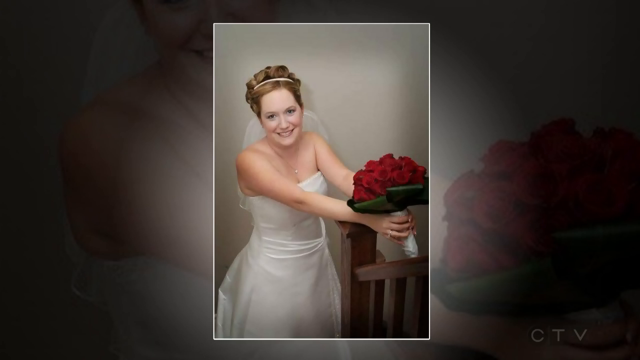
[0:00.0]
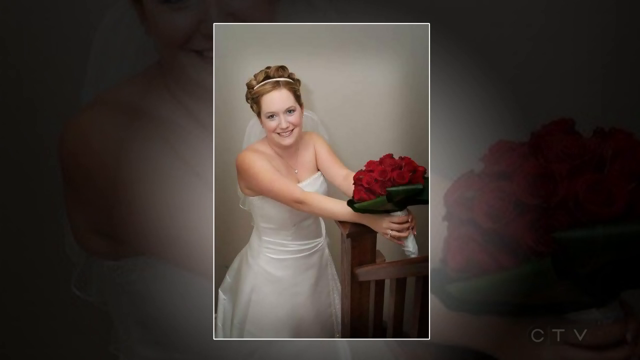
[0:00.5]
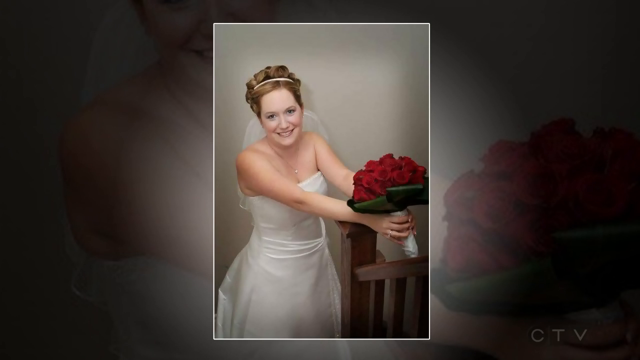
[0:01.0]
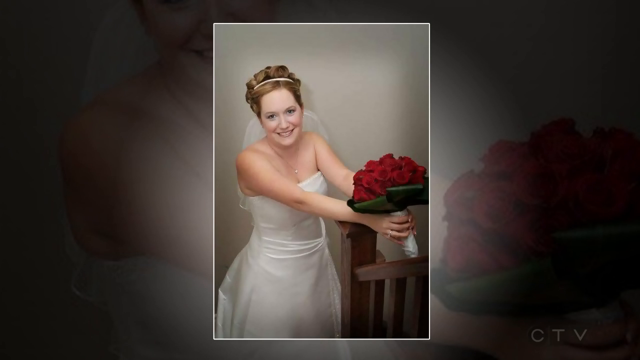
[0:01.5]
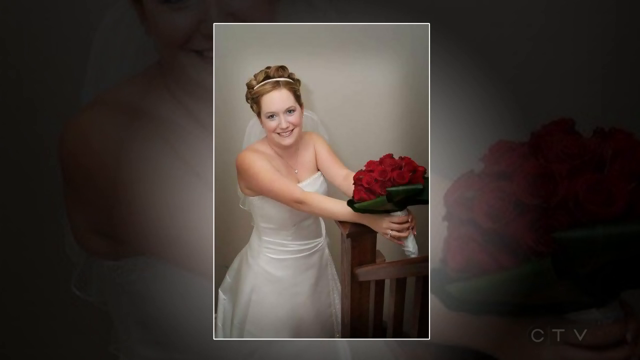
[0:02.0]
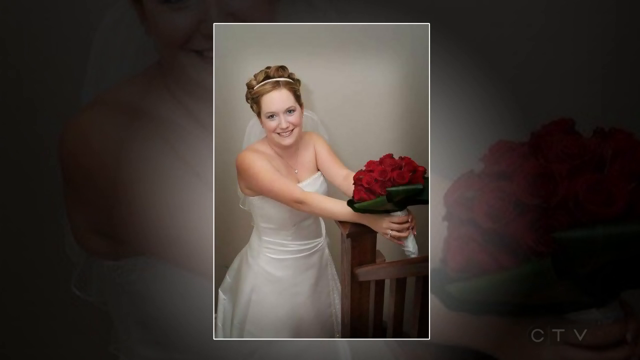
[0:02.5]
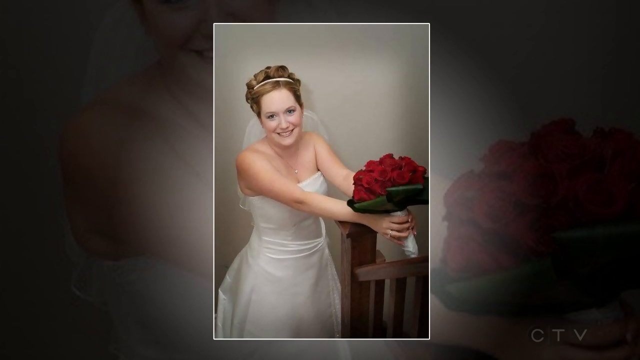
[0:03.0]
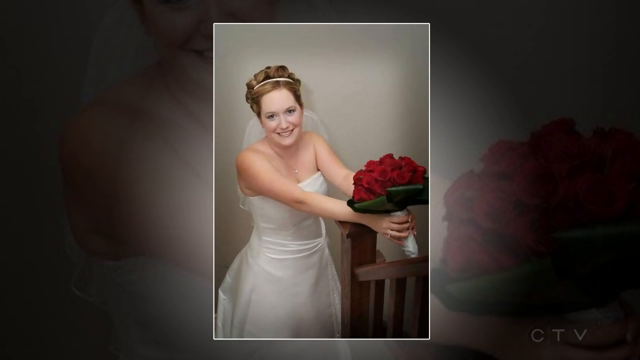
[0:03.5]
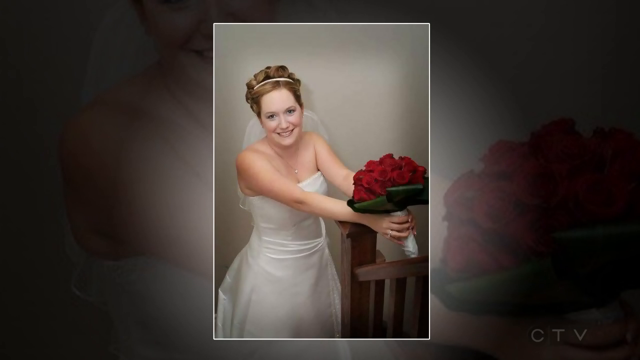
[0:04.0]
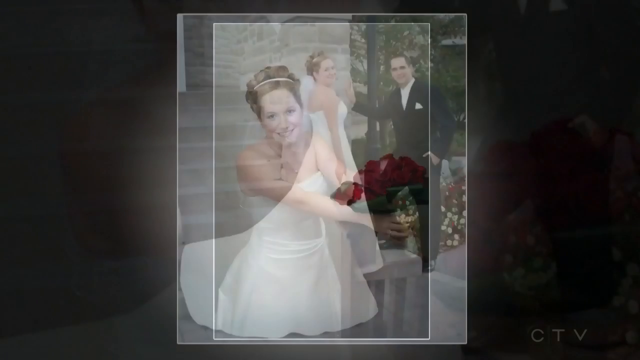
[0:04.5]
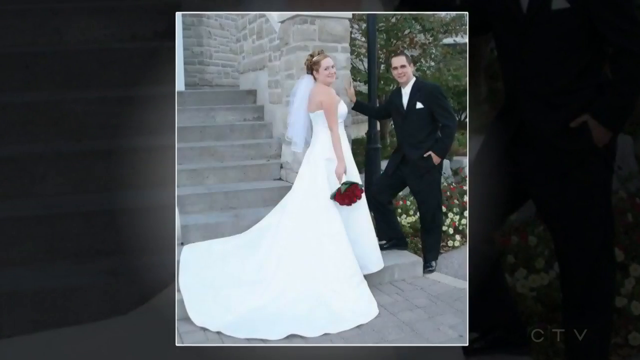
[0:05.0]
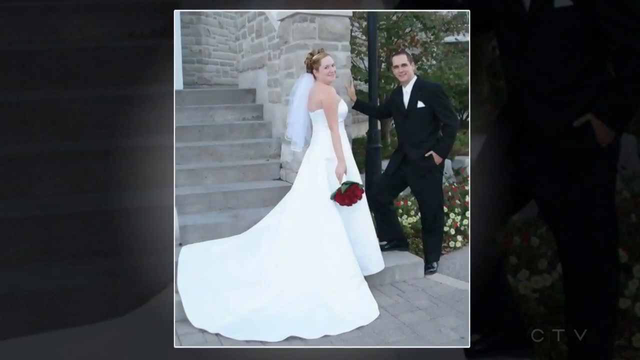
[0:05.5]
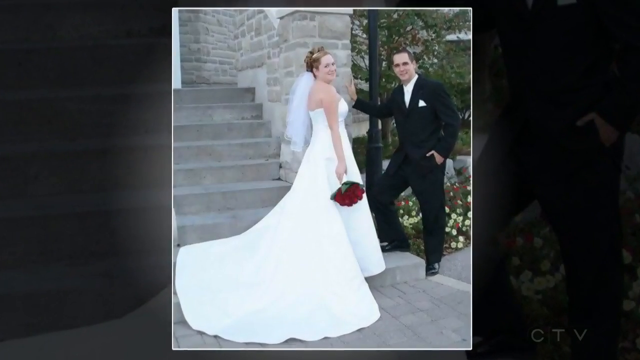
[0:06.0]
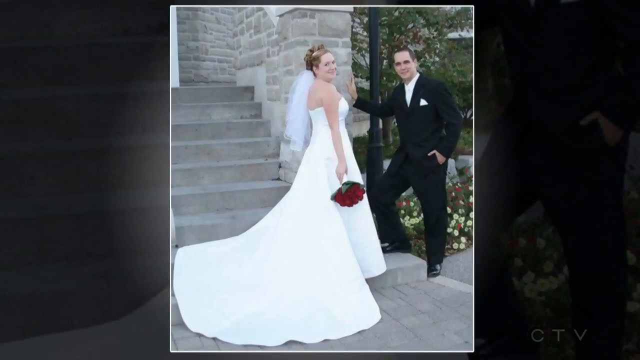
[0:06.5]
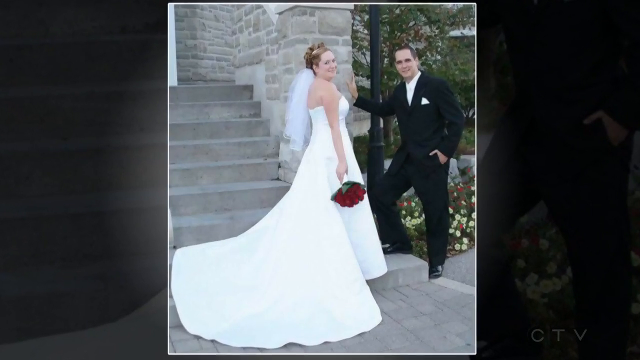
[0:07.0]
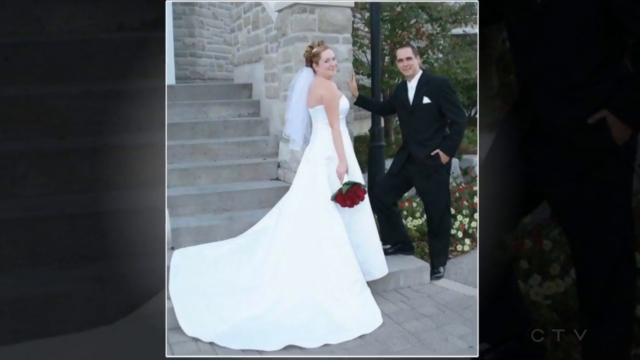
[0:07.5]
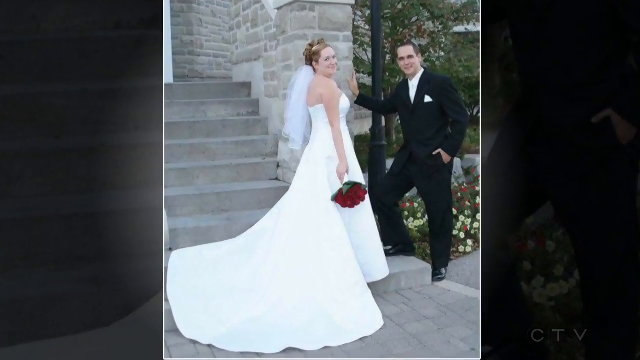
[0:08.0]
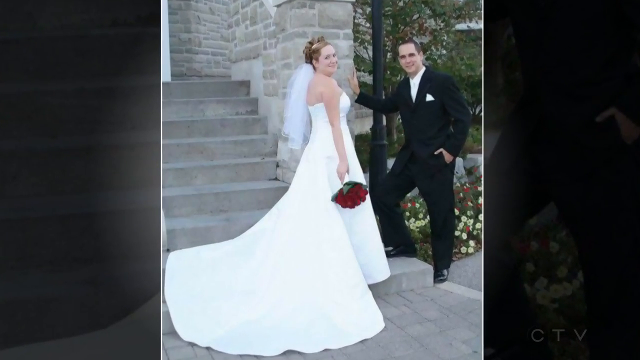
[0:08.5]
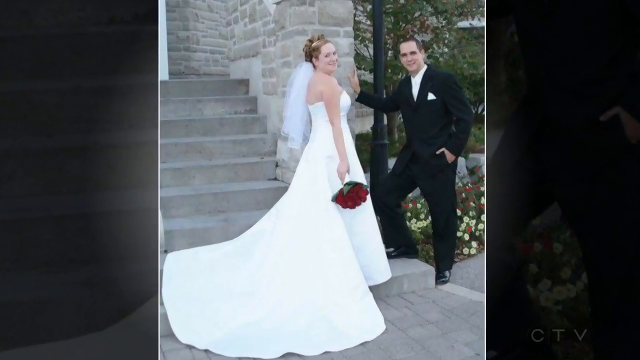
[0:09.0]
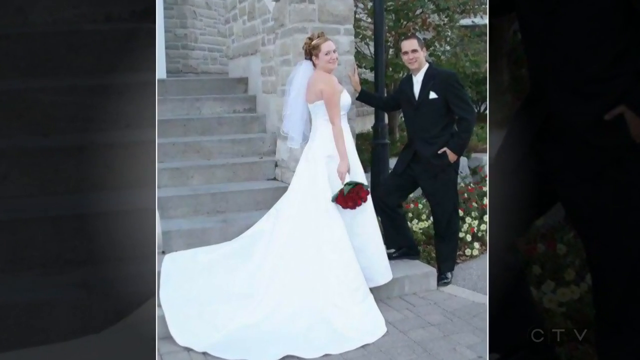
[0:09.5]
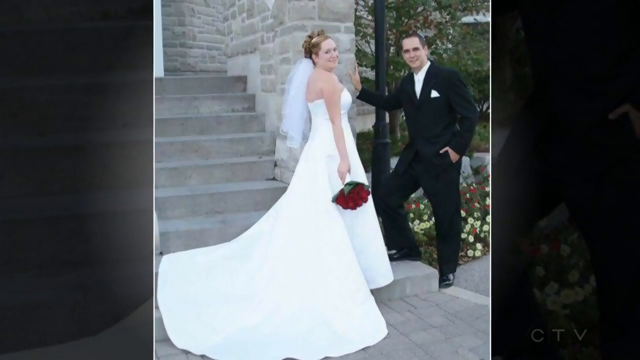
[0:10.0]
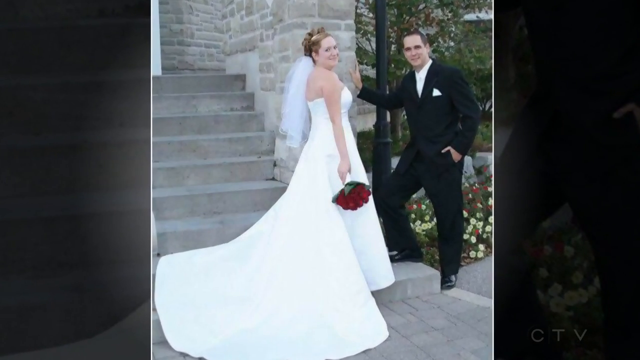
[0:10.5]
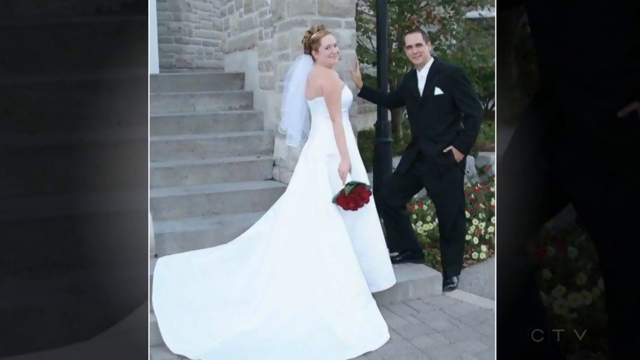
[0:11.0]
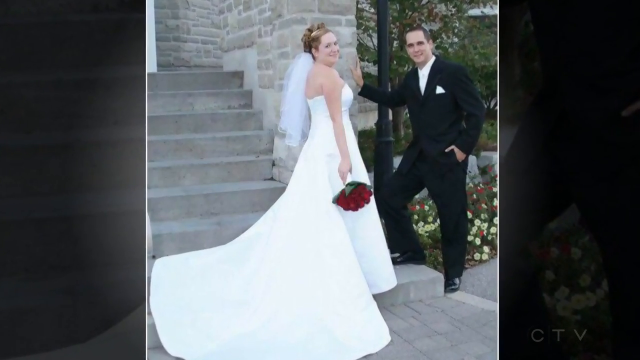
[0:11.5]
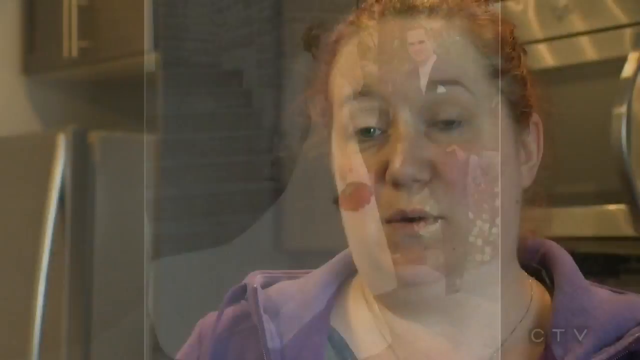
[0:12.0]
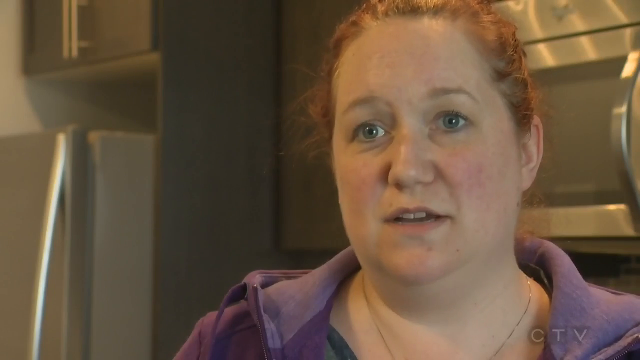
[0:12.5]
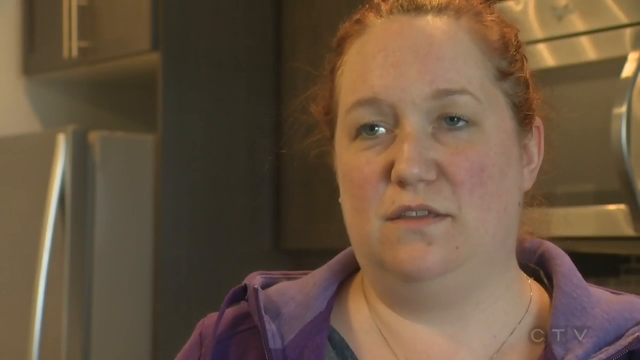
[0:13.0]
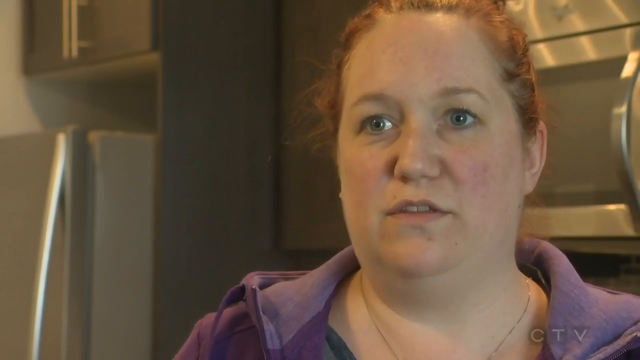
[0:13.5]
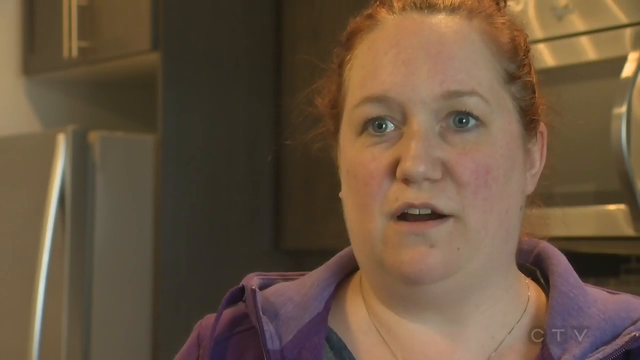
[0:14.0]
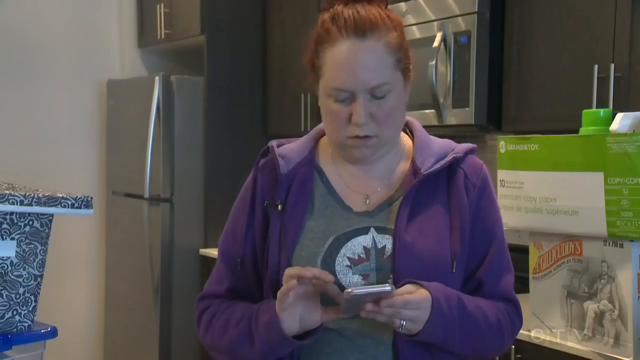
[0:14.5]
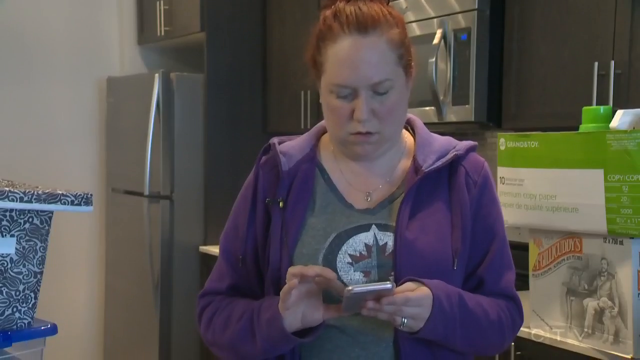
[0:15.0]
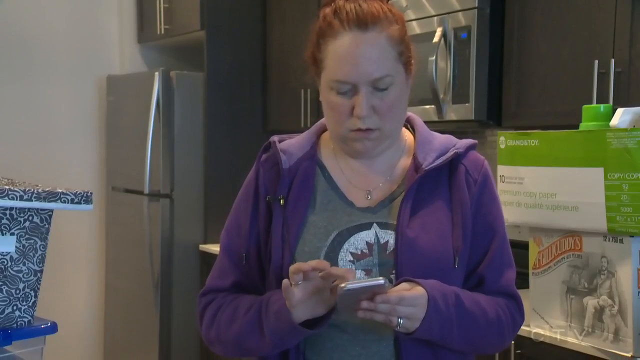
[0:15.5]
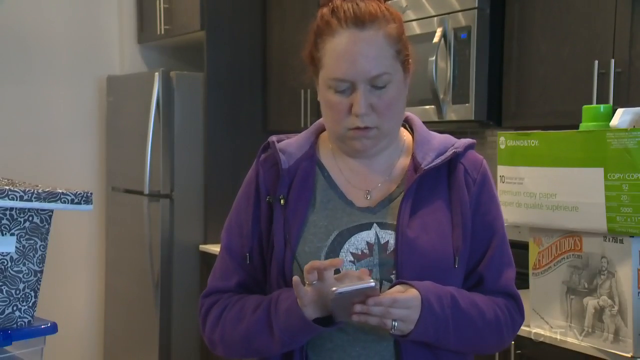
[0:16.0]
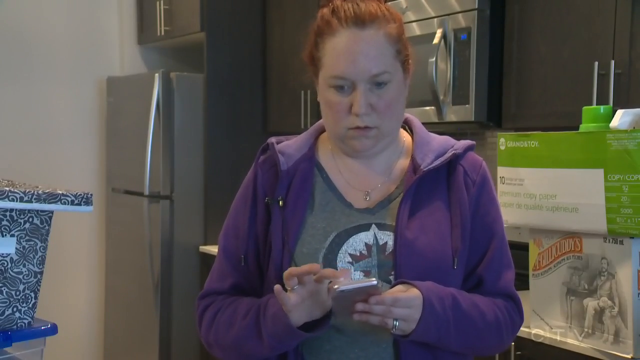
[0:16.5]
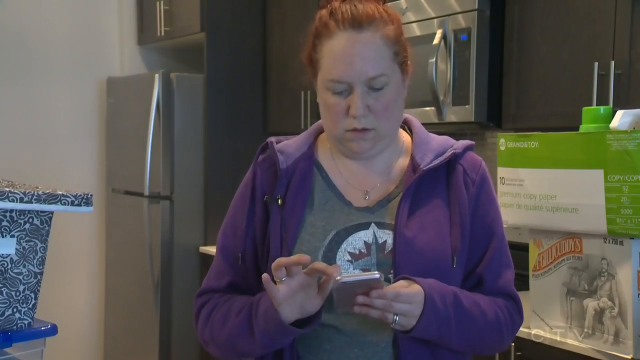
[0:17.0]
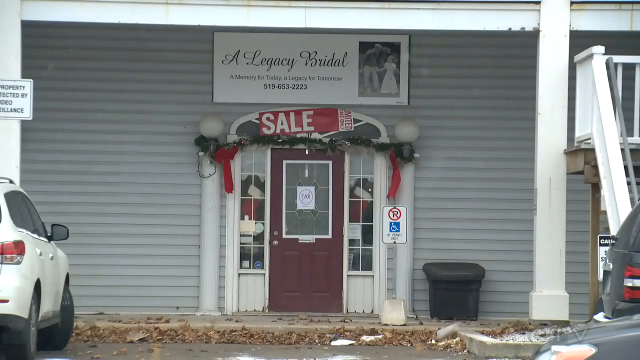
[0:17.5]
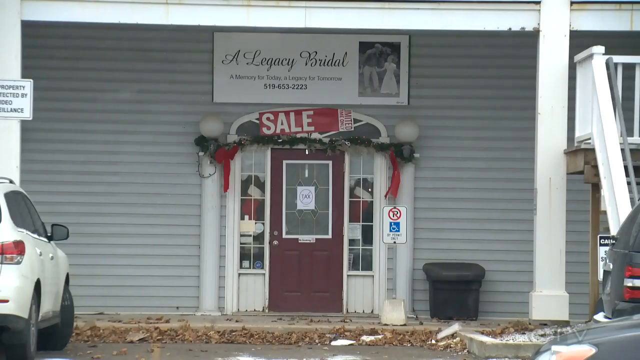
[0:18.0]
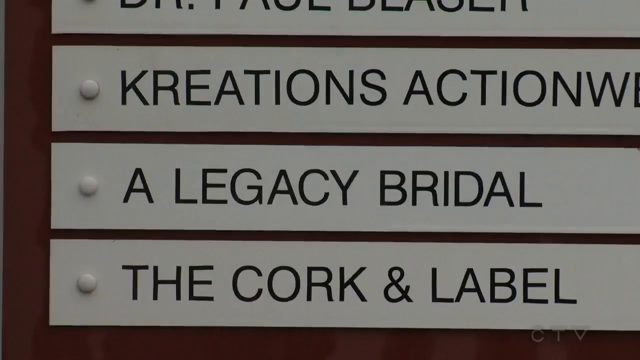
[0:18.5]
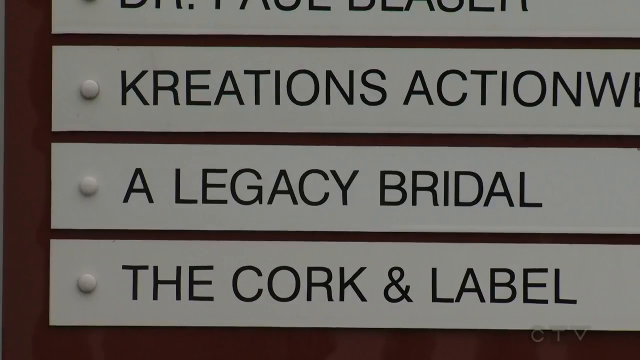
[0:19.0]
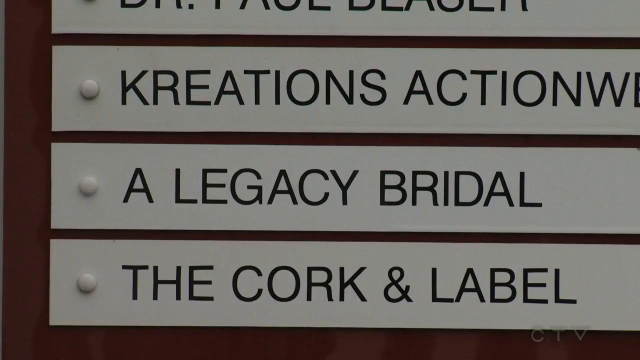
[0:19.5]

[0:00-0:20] A photo shows a bride with a short blonde updo and a veil, wearing a strapless dress and holding a bouquet of red roses, posing at the end of a staircase and looking upward toward the camera. Another angle of the same bride follows: she is at the bottom of an outdoor staircase with stone detailing, wearing a long white strapless dress and holding a bouquet of roses. Another angle shows her wearing black shoes, and the video zooms in closer to the bride and her dress. A woman in a purple hoodie and a gray shirt then talks to the camera. A logo for the Legacy Bridal Store appears, followed by a zoom in on Legacy Bridal. The woman appears very serious as she talks to the camera and is dialing a phone number. After the woman in purple, the video dramatically zooms in on a big red door, apparently the door to the bridal shop, with a giant red sale banner on top of it and the text "Legacy Bridal 96532223".